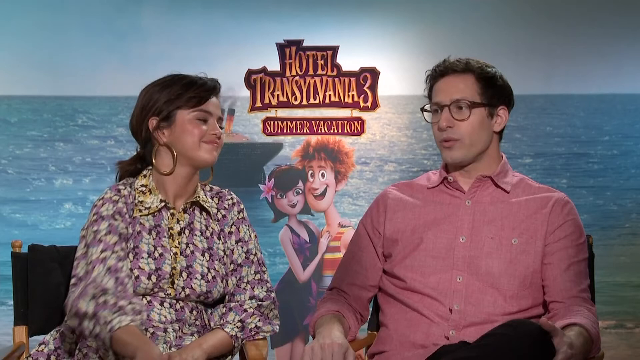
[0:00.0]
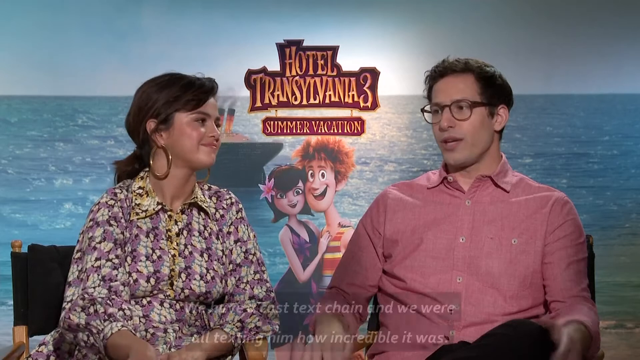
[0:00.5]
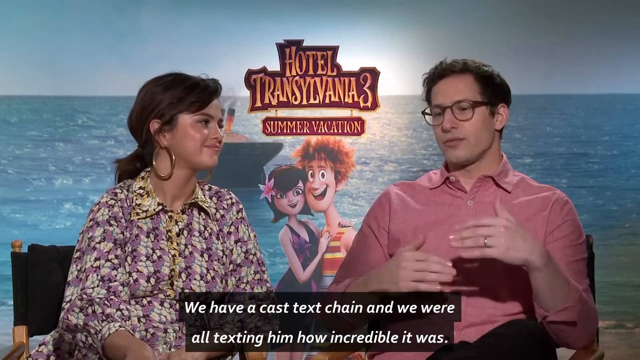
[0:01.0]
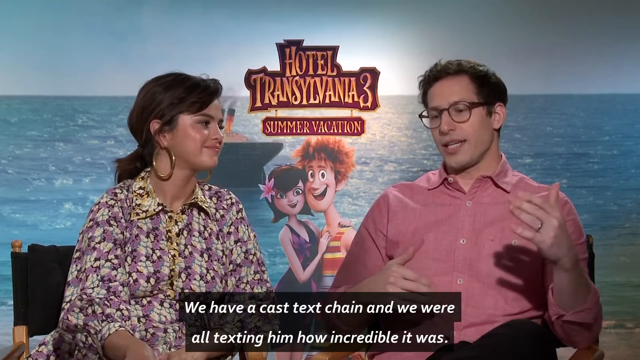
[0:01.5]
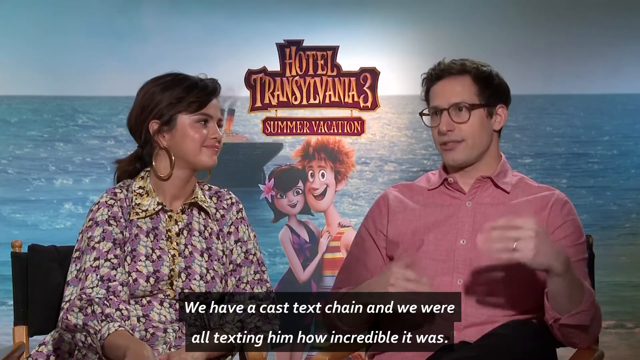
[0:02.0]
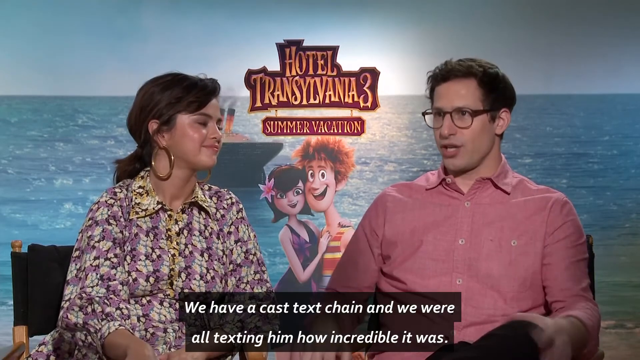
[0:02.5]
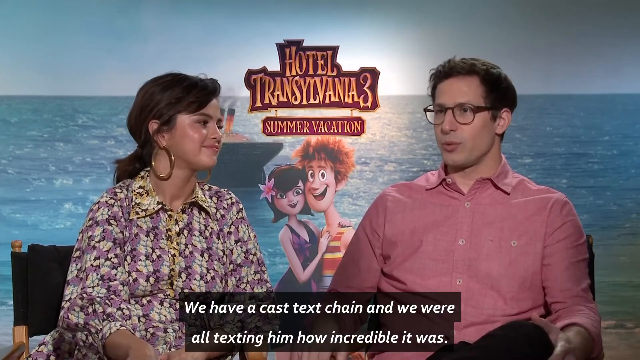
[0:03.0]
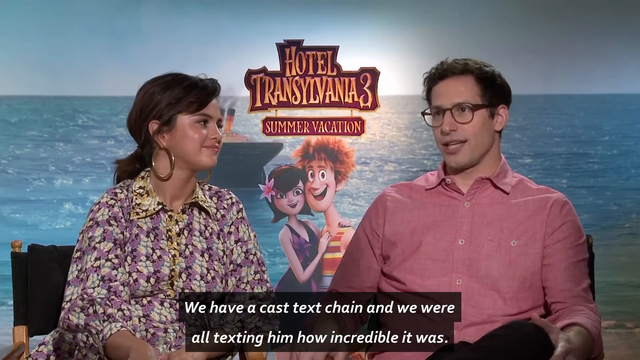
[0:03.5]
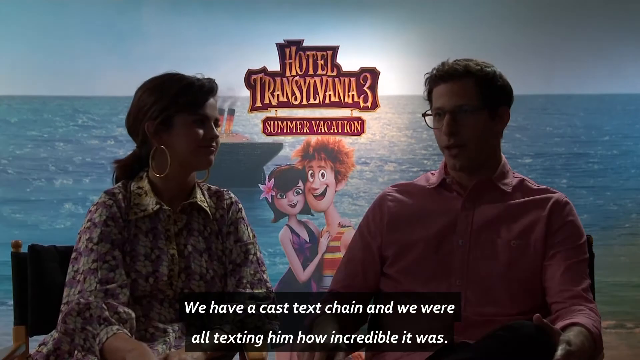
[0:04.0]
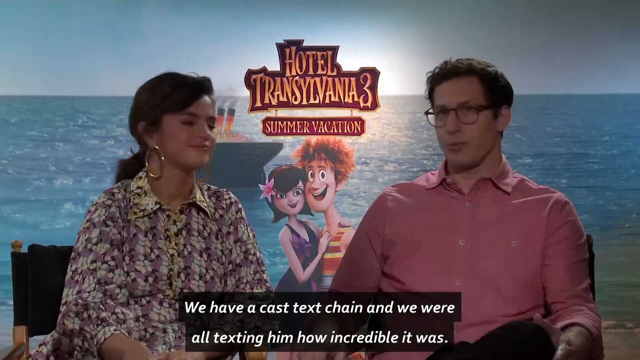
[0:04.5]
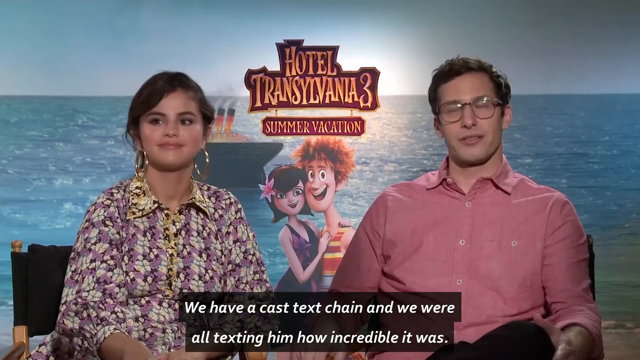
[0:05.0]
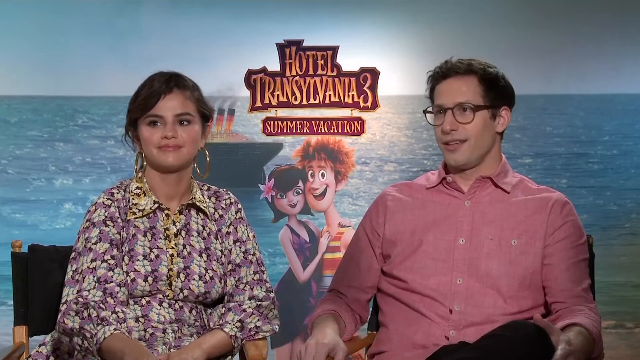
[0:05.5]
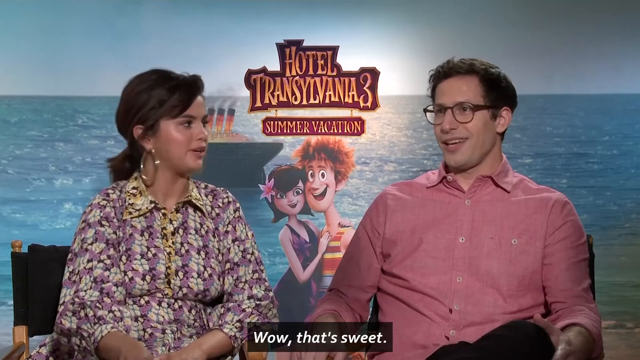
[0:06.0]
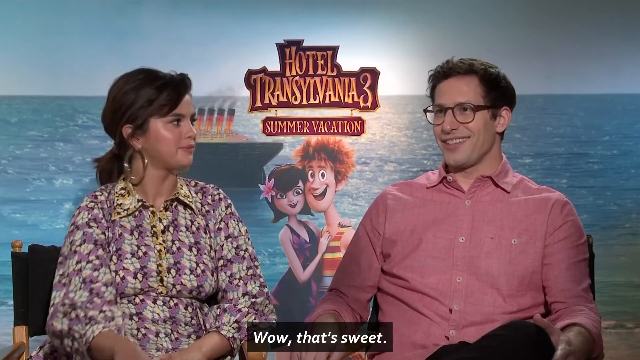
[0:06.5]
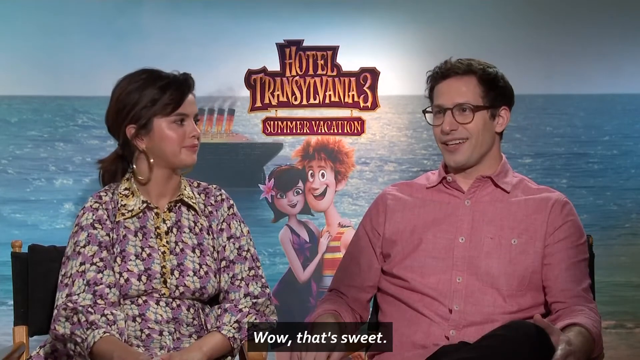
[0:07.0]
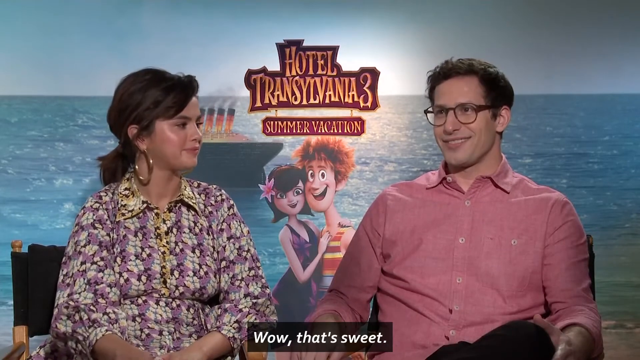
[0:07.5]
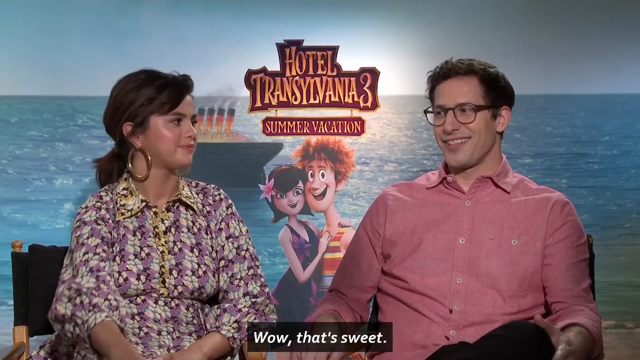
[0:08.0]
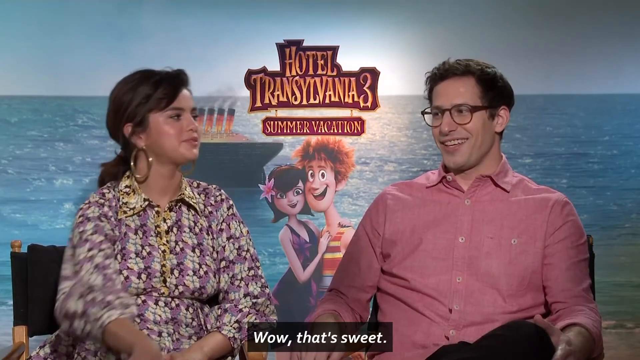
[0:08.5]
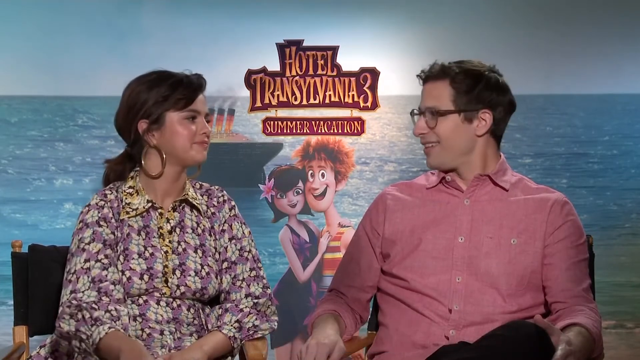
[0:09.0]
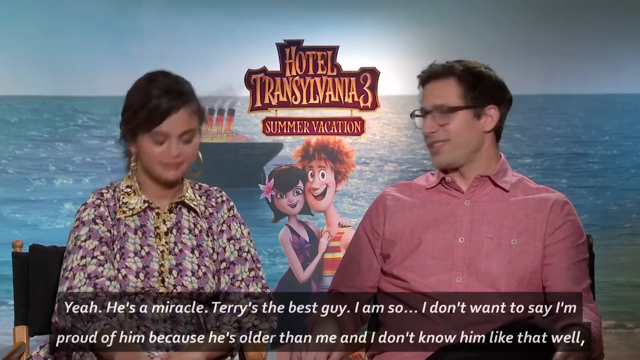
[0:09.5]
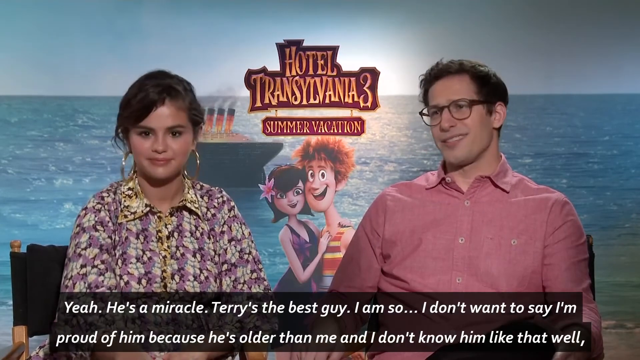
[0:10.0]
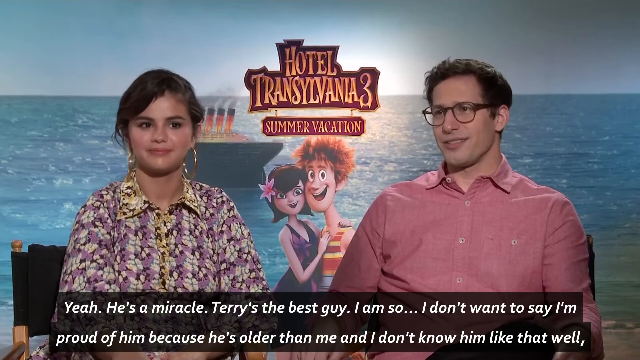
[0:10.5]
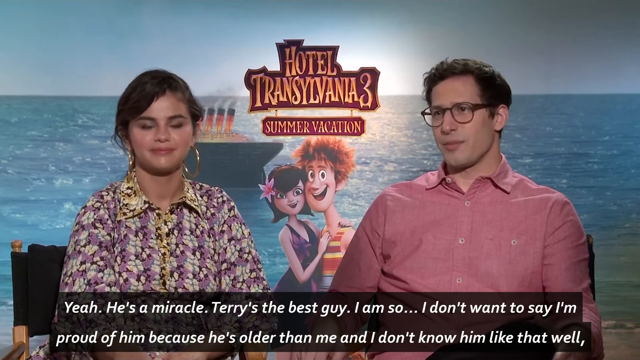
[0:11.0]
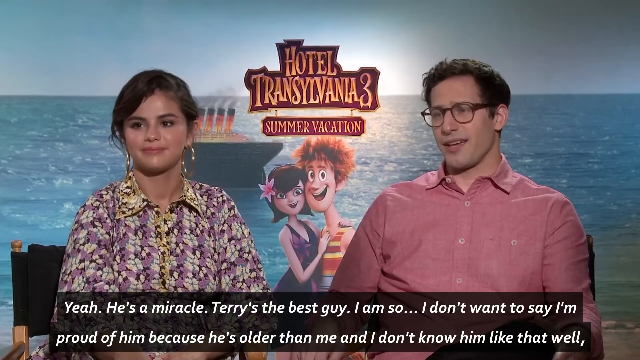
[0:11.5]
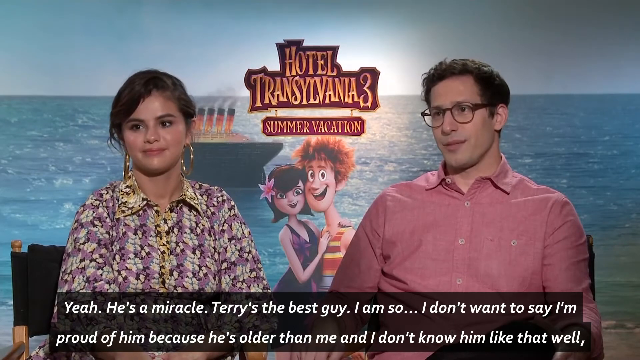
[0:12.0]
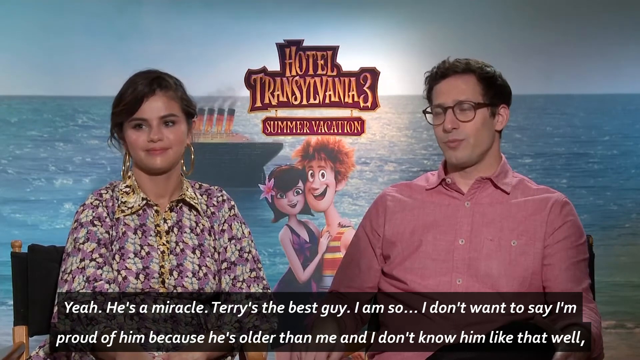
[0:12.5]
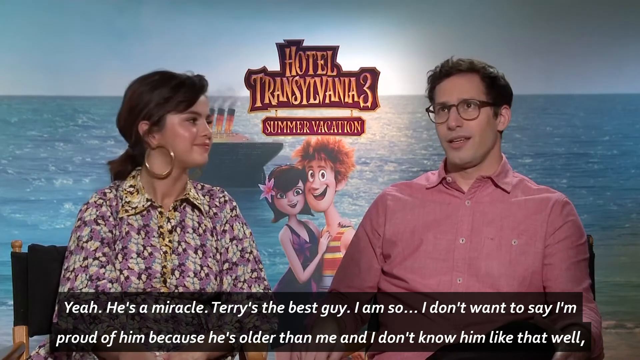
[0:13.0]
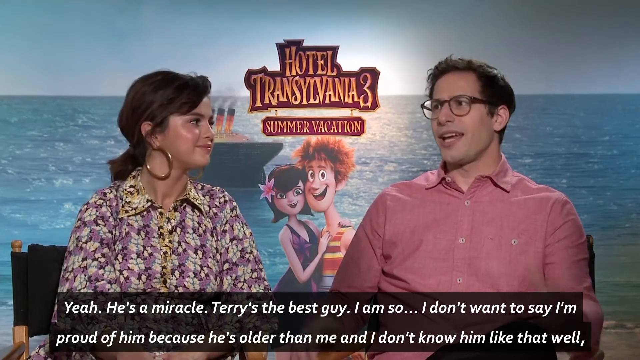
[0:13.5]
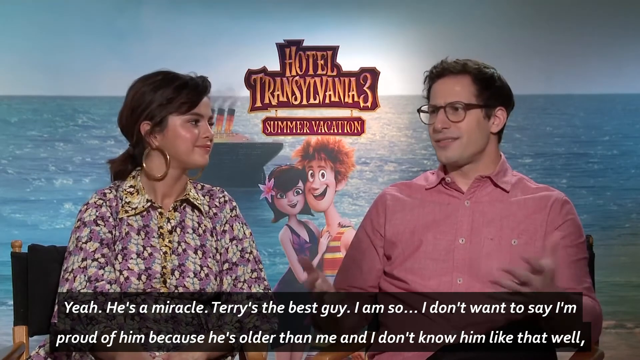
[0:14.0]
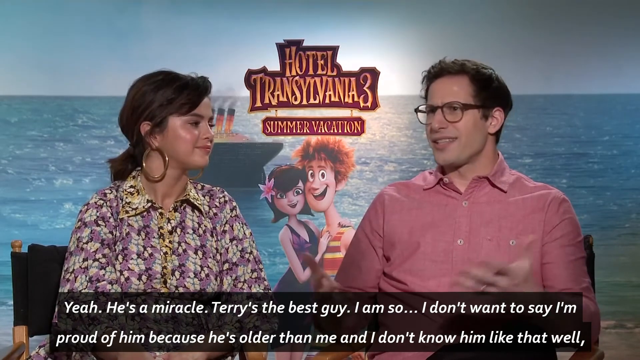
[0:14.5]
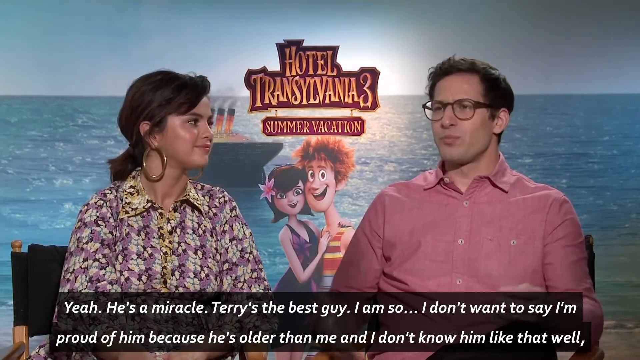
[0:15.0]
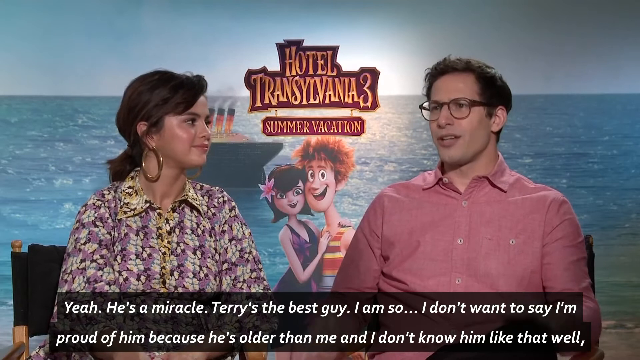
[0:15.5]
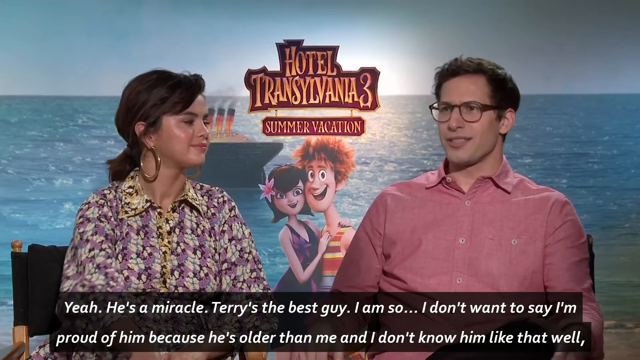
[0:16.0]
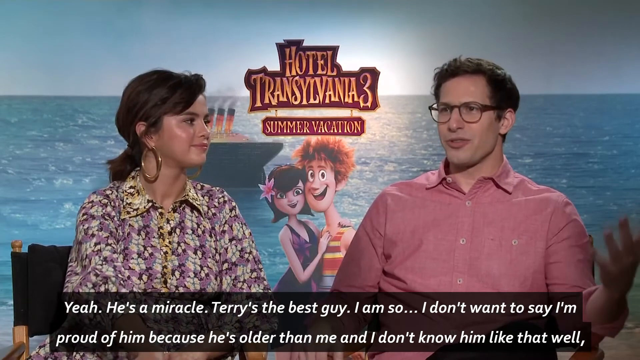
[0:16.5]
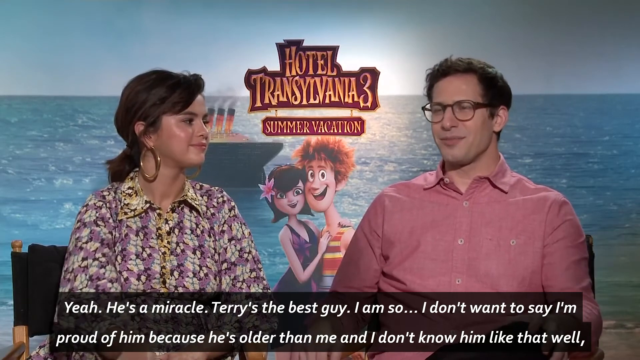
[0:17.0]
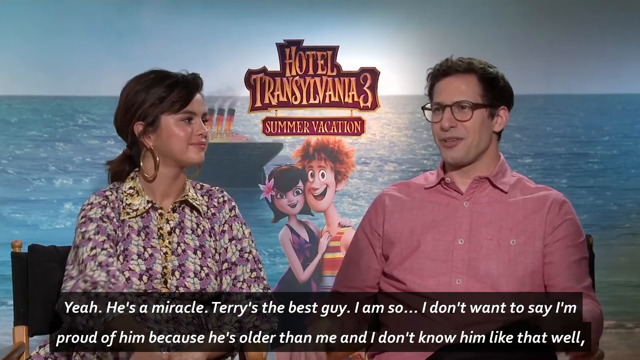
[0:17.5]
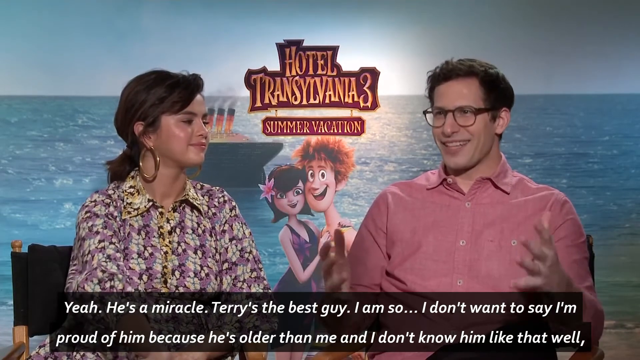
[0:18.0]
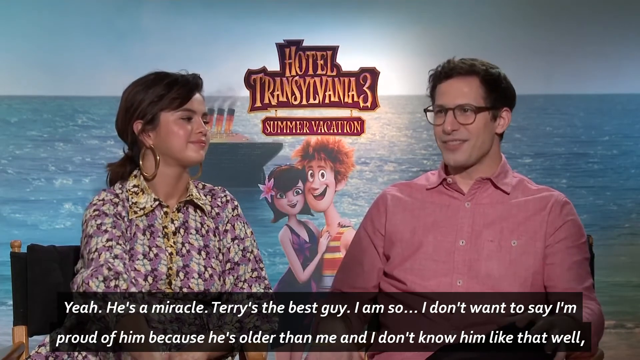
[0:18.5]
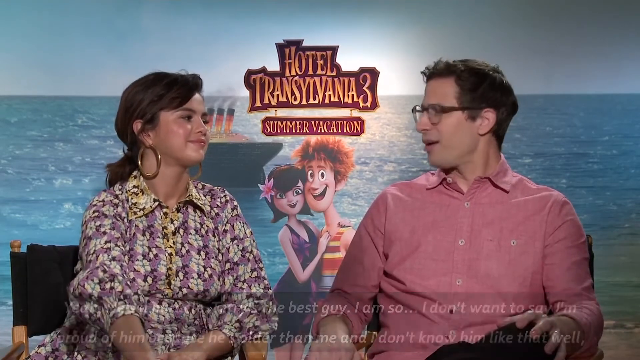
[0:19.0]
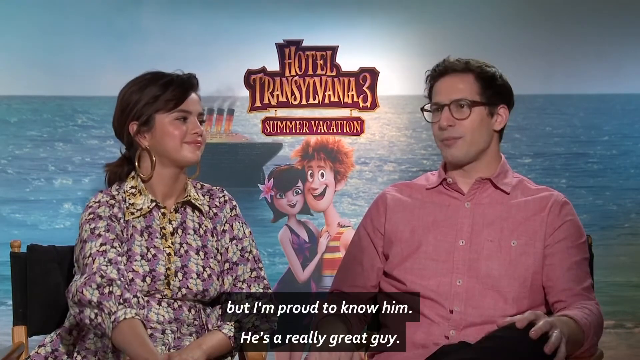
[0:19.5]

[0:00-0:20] The video opens on a background with the text "Hotel Transylvania 3 Summer Vacation." It shows a young girl and a young boy as cartoon figures. In the foreground are a girl and a man, presumably the people who voice these cartoon characters, and they appear to be speaking. The lights dim on them and then come back on. The man wears glasses and a peach-colored collared shirt, and he has brunette hair. The girl on the left resembles Selena Gomez, though it is uncertain whether it is her; she wears a collared shirt covered in purple, lavender and white flowers, with a yellowish-green collar, and green hoop earrings. The background appears to be the sea, with a boat in the water behind the two cartoon figures.